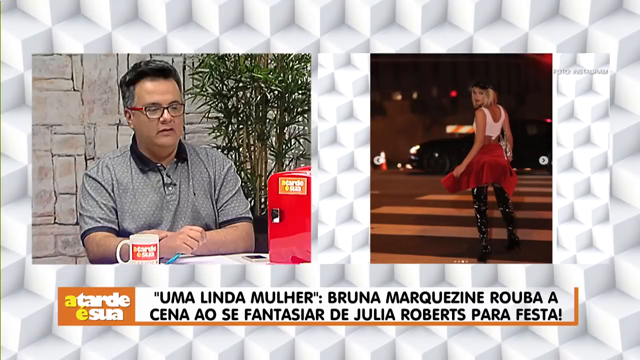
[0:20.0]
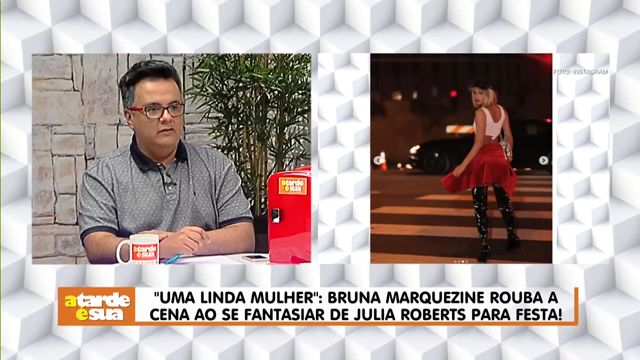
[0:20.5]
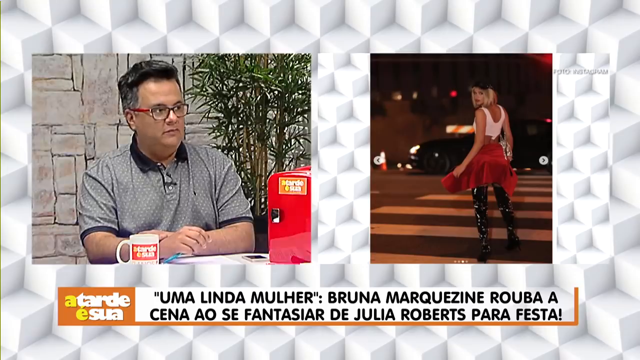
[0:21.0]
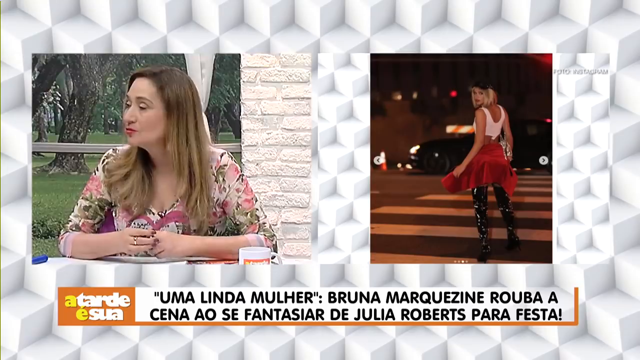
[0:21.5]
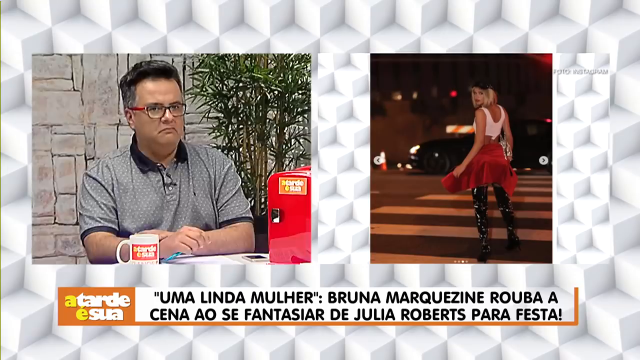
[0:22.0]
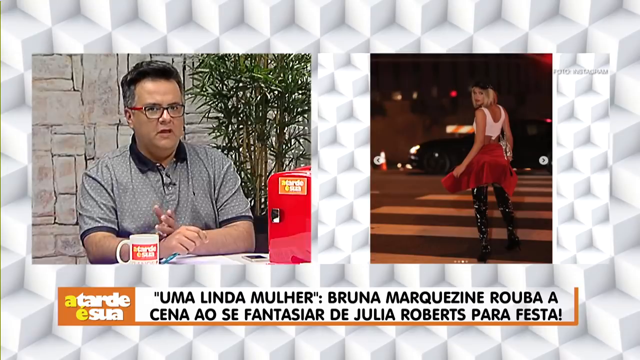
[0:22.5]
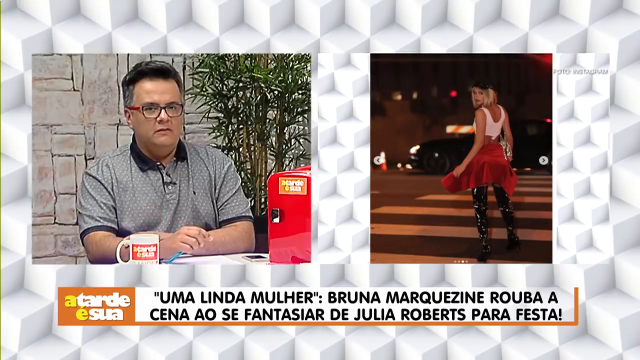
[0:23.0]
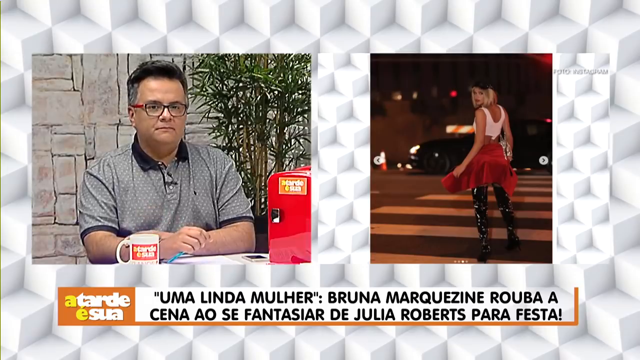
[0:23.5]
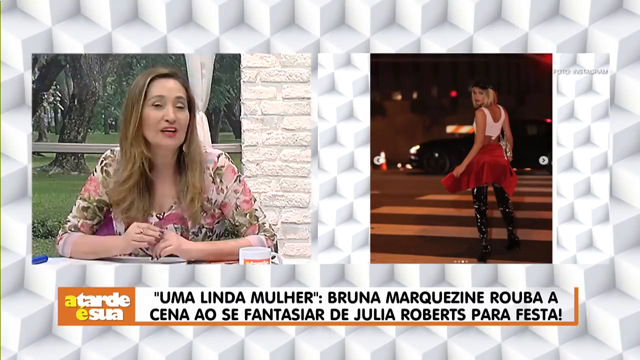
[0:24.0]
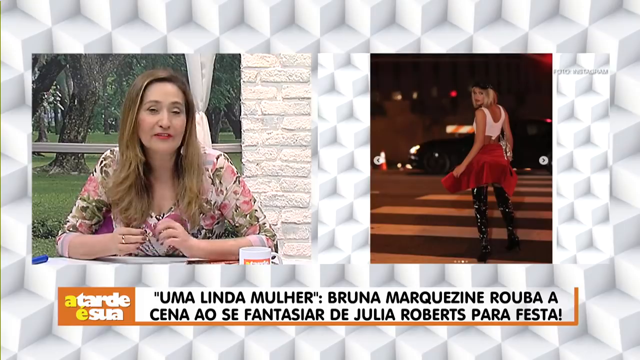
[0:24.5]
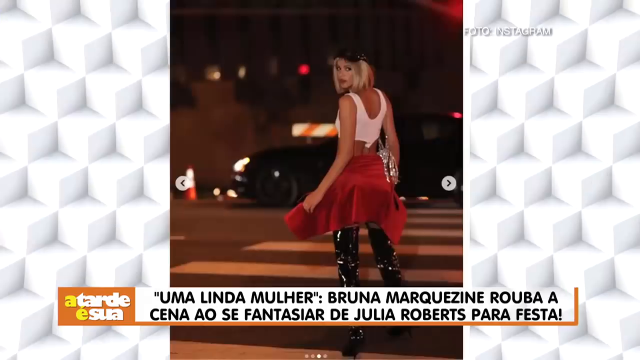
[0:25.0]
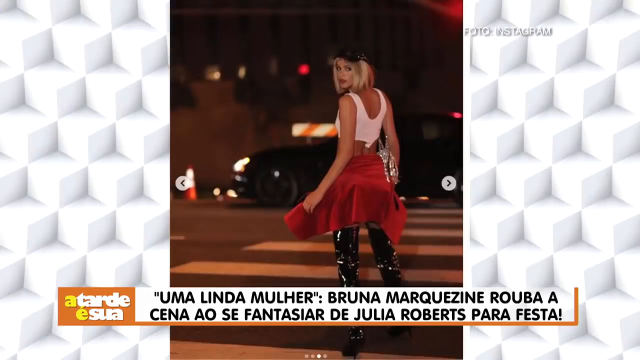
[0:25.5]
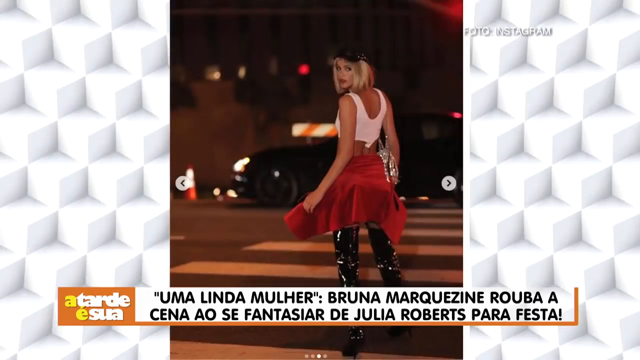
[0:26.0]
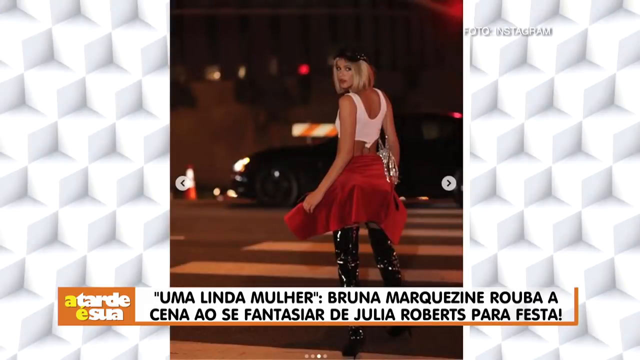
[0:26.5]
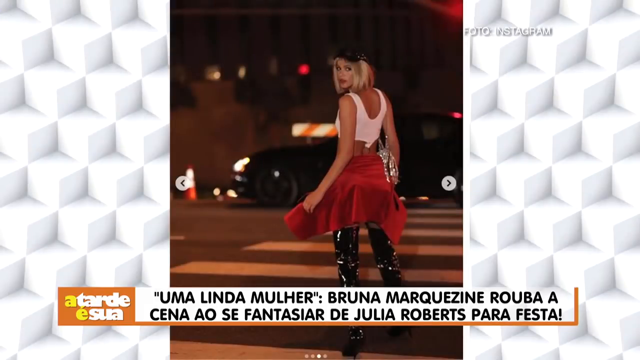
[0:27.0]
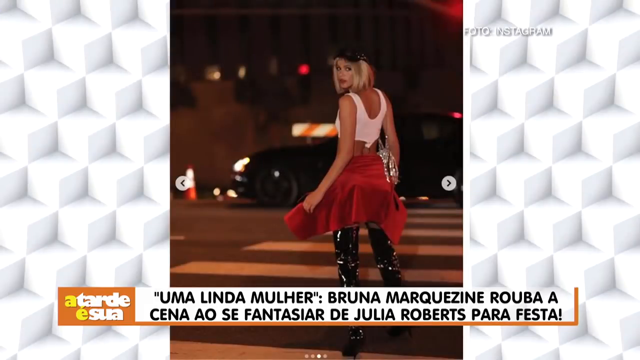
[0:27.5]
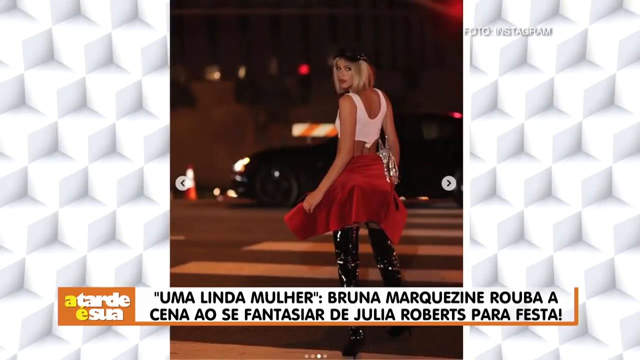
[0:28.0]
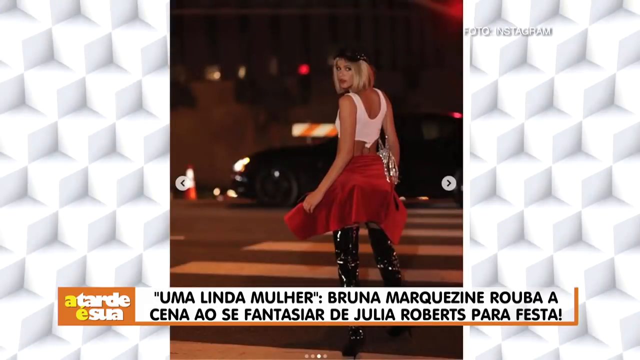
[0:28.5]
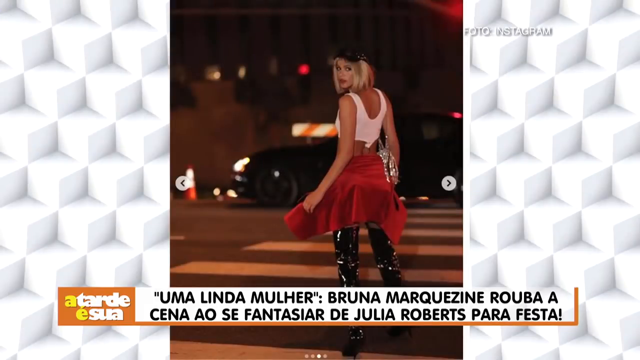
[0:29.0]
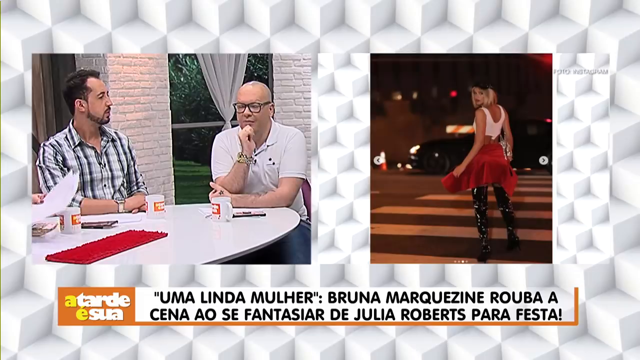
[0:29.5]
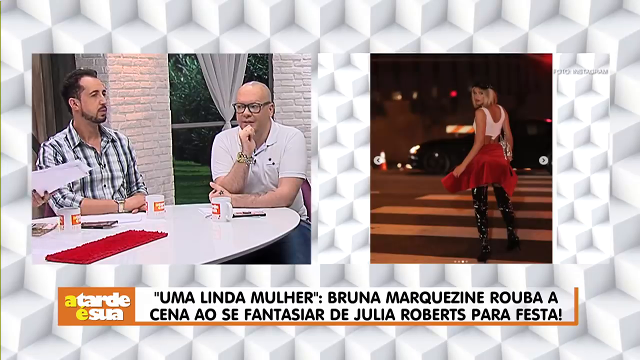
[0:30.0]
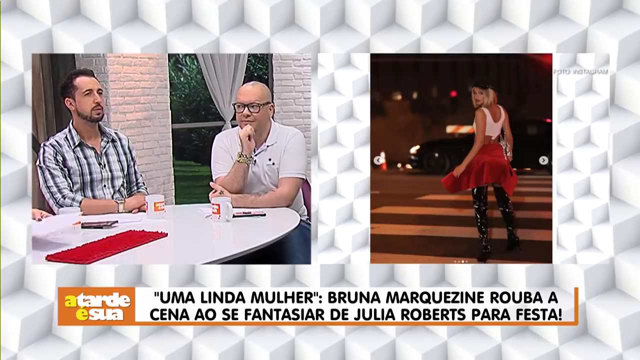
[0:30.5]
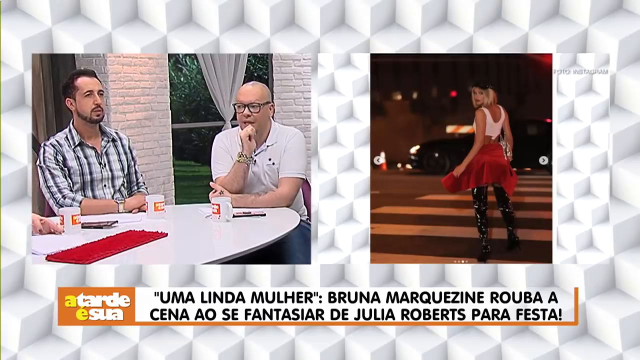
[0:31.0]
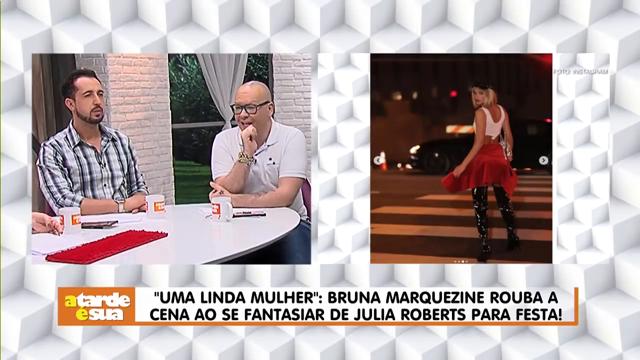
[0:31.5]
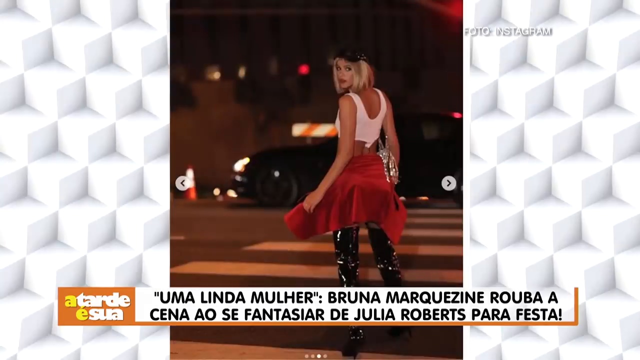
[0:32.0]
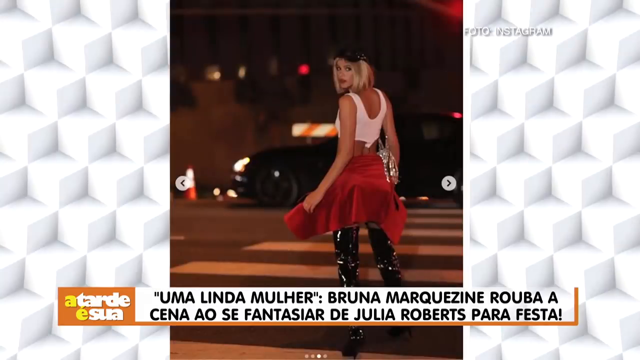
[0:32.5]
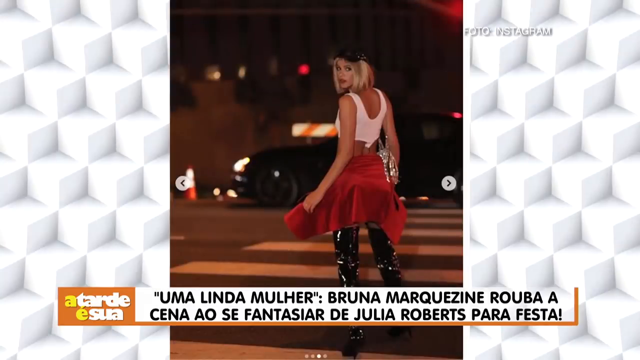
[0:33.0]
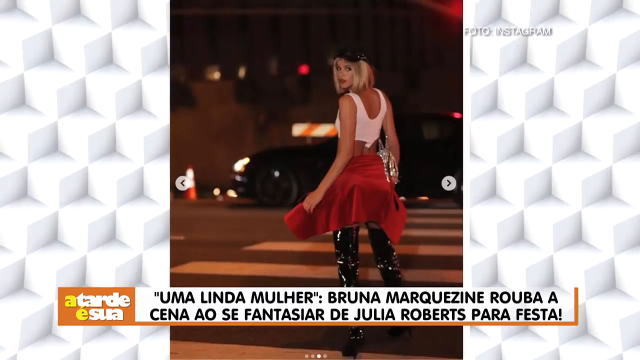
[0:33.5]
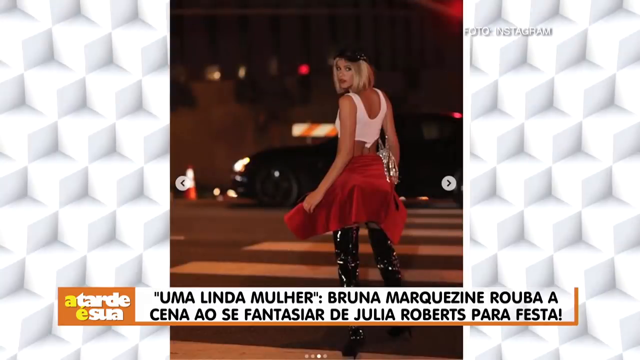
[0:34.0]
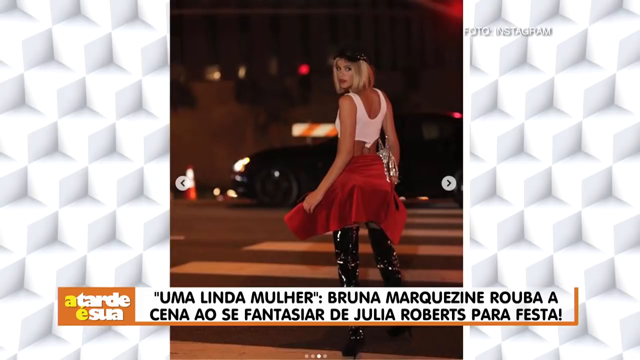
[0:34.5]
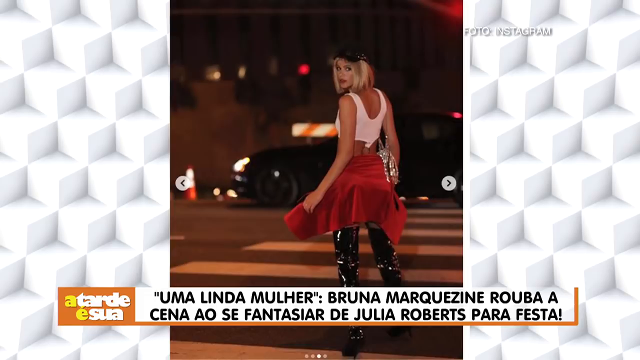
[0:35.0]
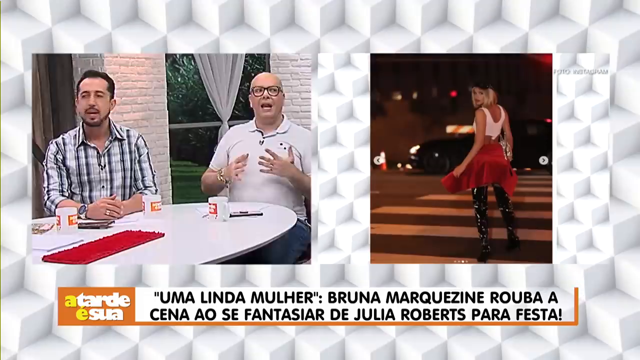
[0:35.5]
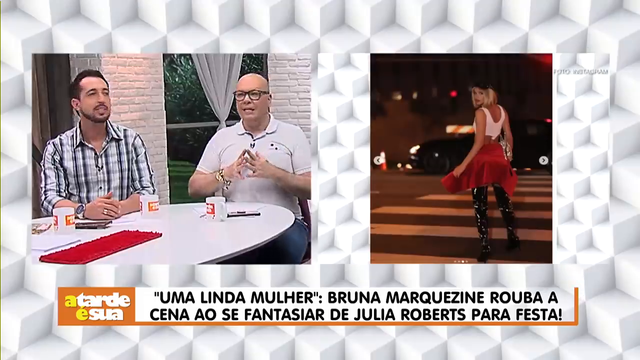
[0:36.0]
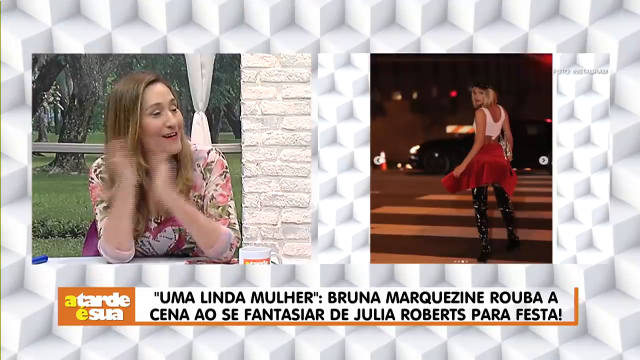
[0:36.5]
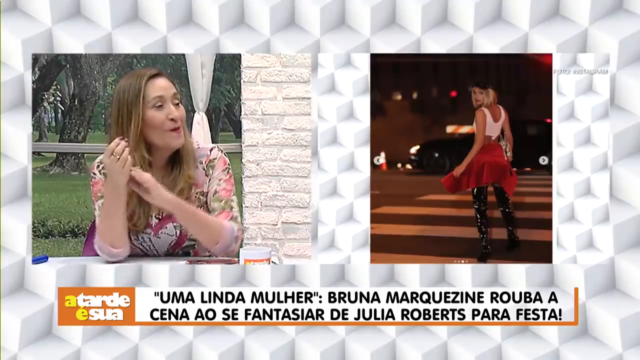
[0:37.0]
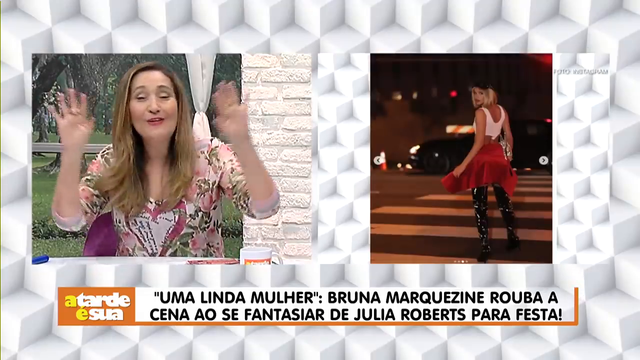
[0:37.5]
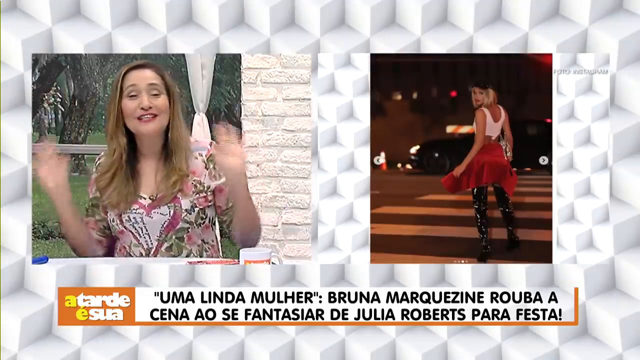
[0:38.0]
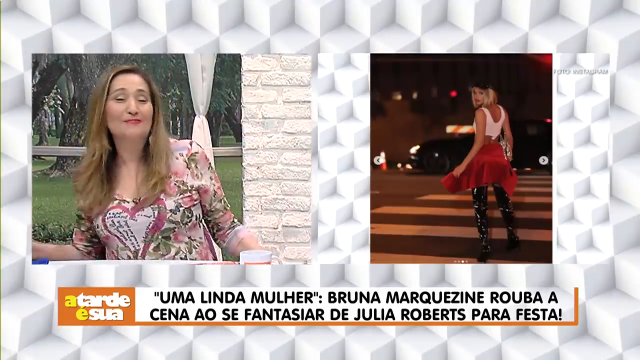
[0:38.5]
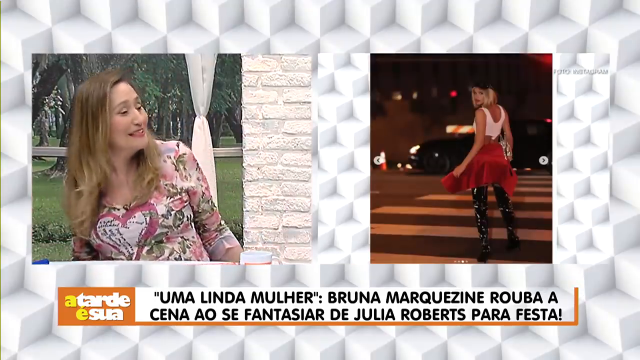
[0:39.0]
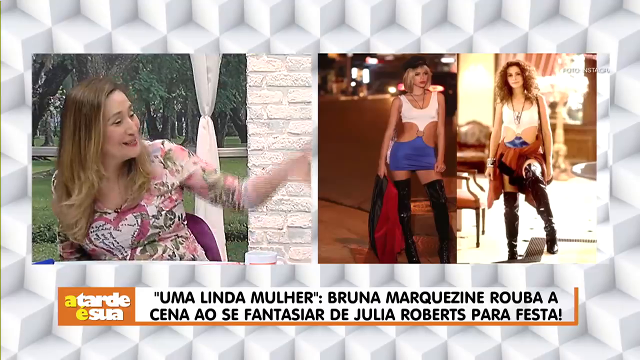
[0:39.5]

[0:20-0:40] On the left, the man in the gray polo with black accents and glasses is in front of the ficus tree, with something like a block wall behind him and a coffee cup on the table; he may have a pen in his hands. On the right is the woman who looks like Julia Roberts, and text on screen includes the names "Linda Mueller" and "Julia Roberts". The woman in the floral print dress is shown turned to her right, apparently talking to the man in the gray shirt; he nods, throws up a hand slightly, has a kind of frowny face and talks for a bit. The woman in the floral dress is shown talking again. A close-up of the Julia Roberts-looking image follows, with blocky backgrounds behind it like a studio presentation frame, and it stays up for a while. Then smaller shots return: the bald man and the man in the striped shirt at the table on the left, and the Julia Roberts-looking person on the right, as they talk. The image is shown in close-up again, then the bald man, the man in the striped shirt and the woman in the floral print are shown talking. The image pairs a photo from the actual Pretty Woman movie, with Julia Roberts in this outfit, next to the other woman, and the two look very similar.